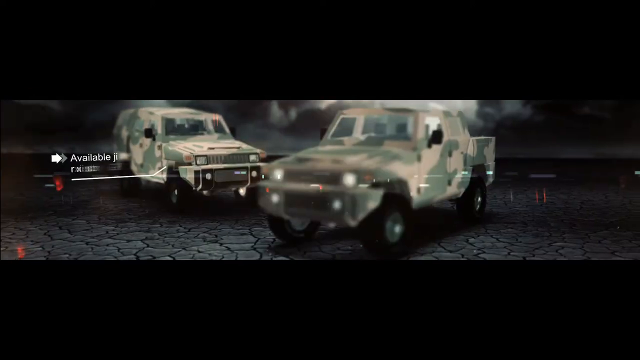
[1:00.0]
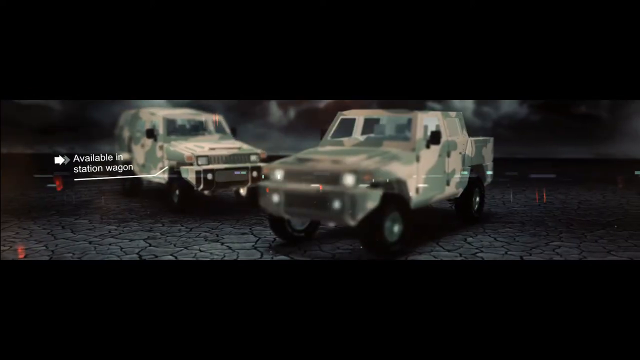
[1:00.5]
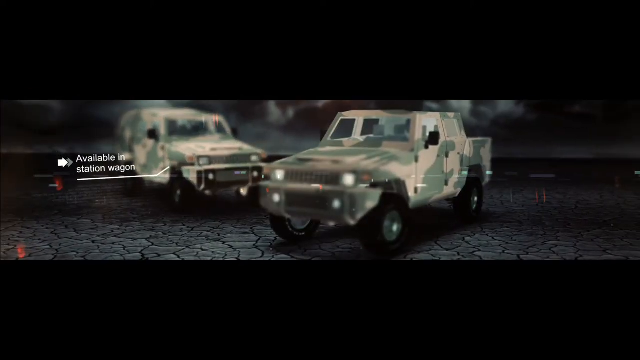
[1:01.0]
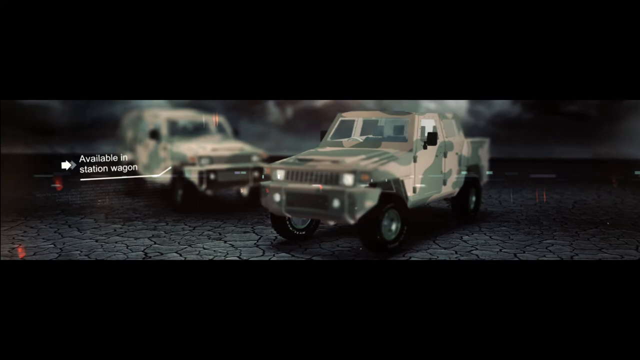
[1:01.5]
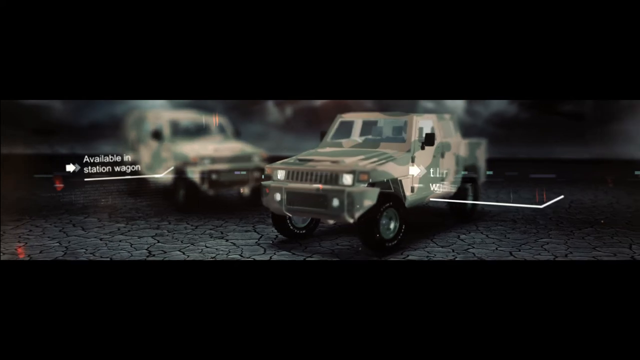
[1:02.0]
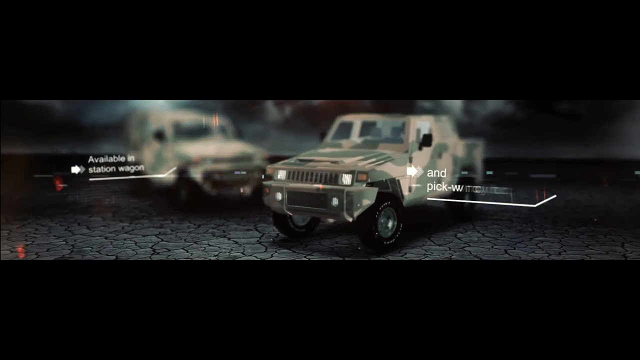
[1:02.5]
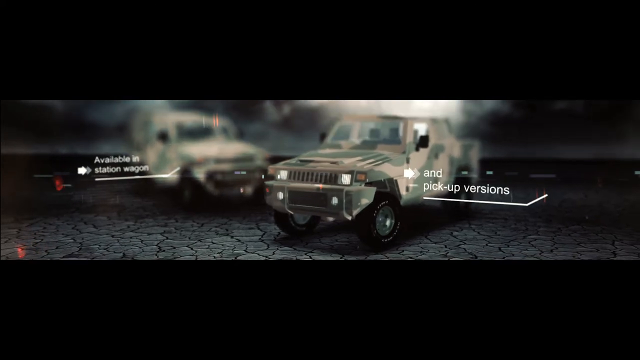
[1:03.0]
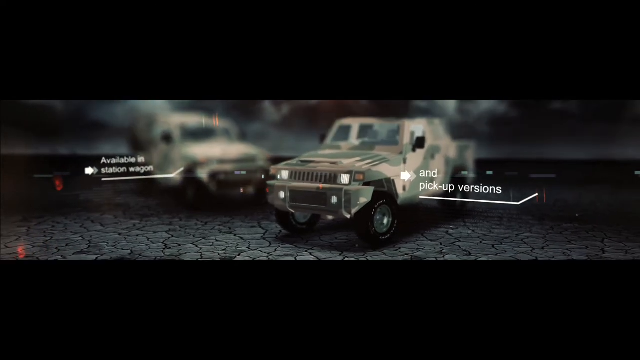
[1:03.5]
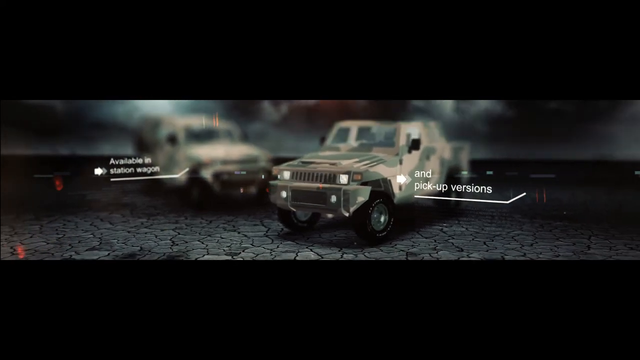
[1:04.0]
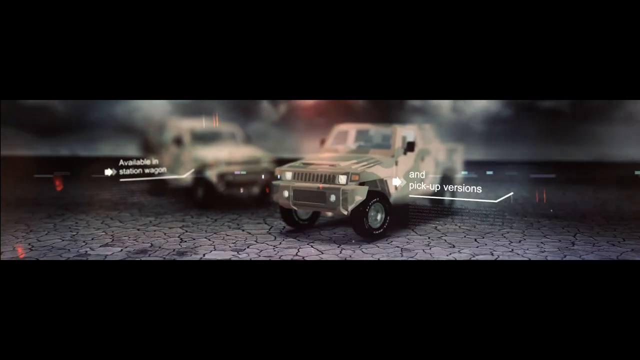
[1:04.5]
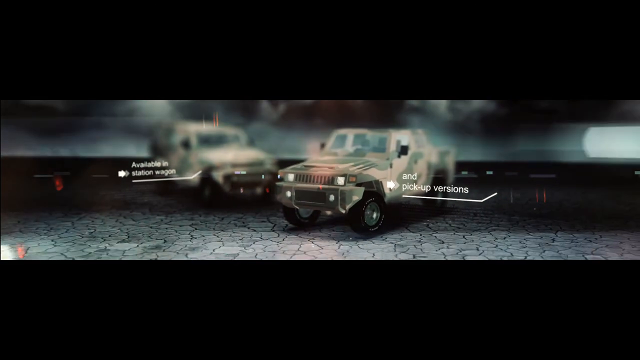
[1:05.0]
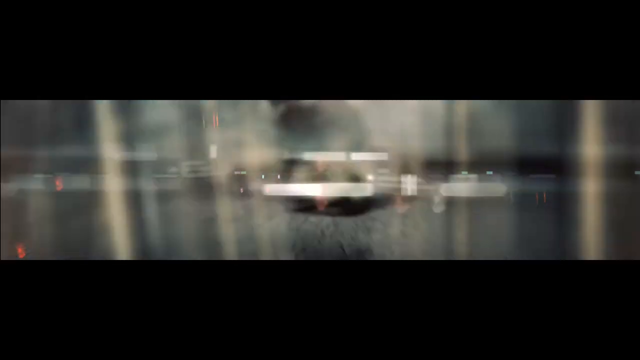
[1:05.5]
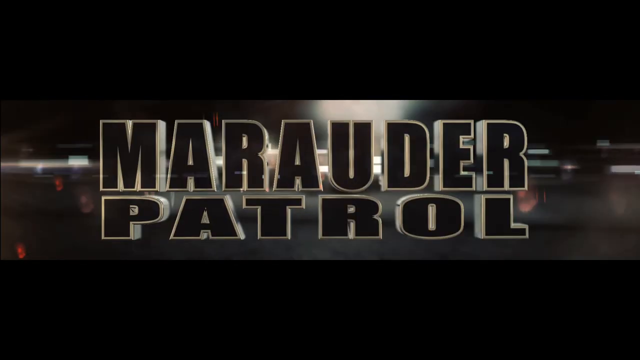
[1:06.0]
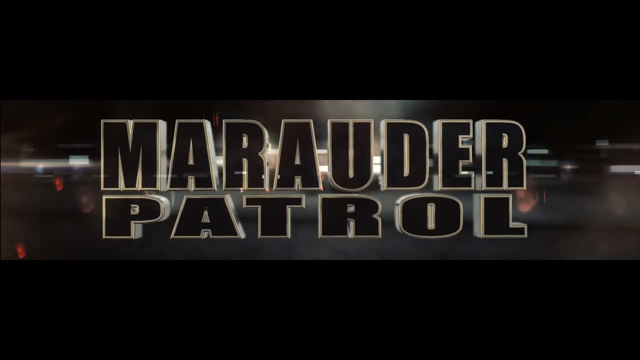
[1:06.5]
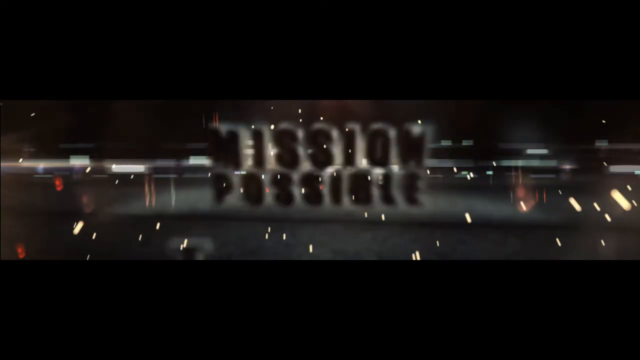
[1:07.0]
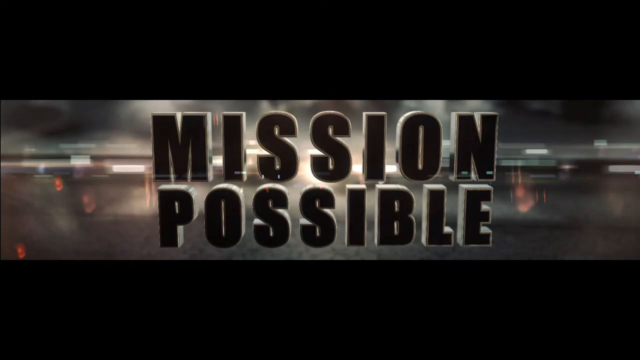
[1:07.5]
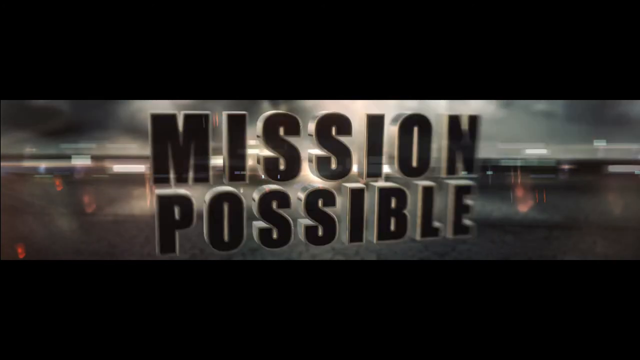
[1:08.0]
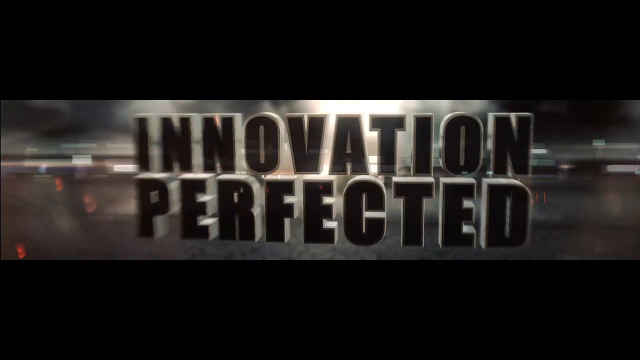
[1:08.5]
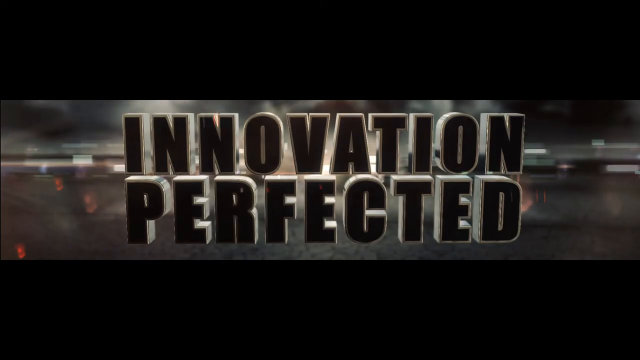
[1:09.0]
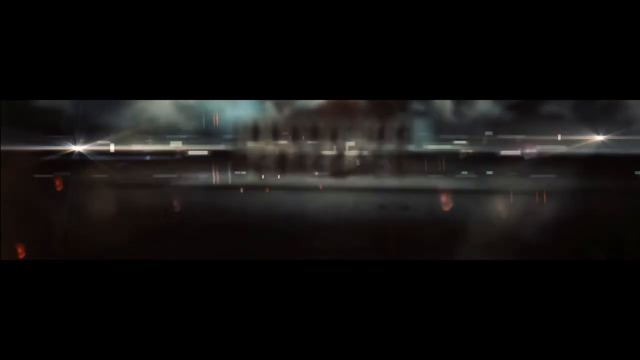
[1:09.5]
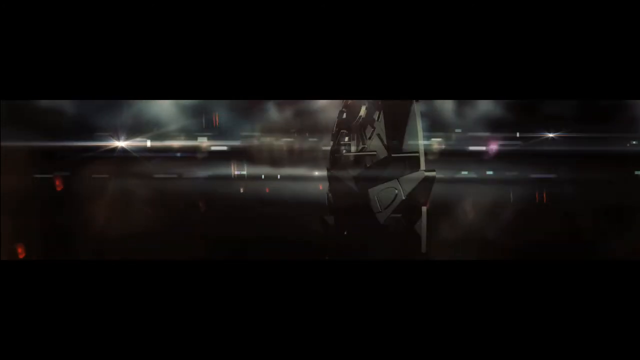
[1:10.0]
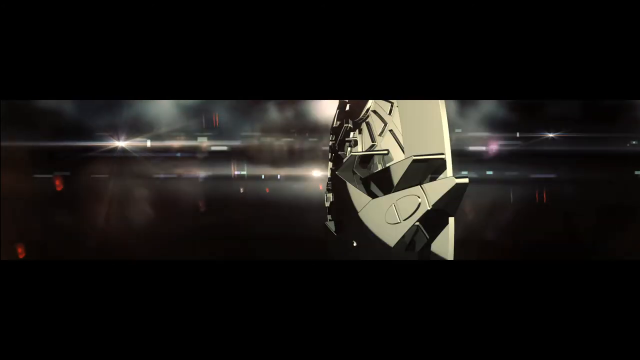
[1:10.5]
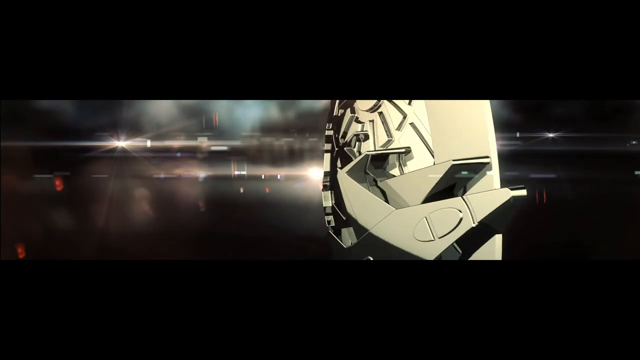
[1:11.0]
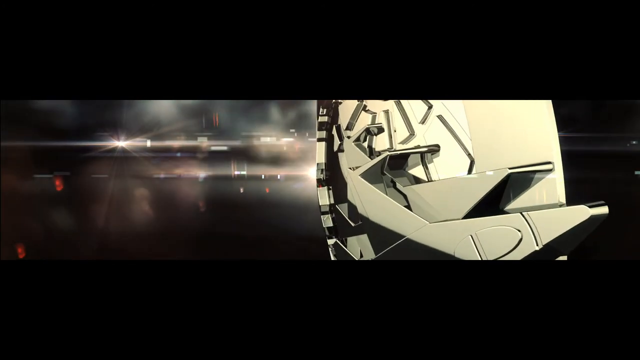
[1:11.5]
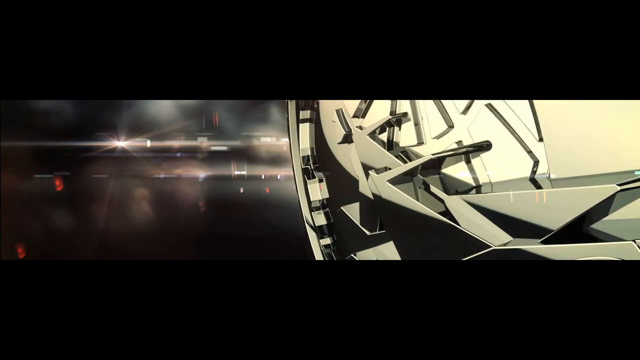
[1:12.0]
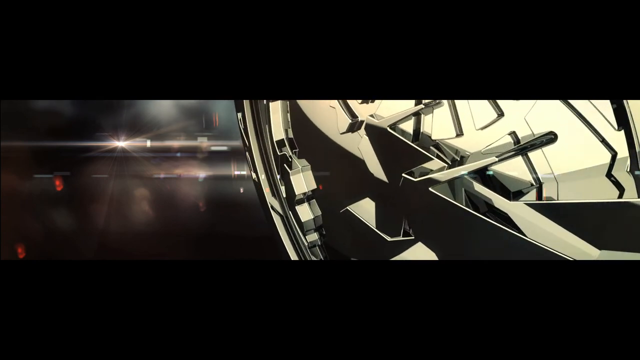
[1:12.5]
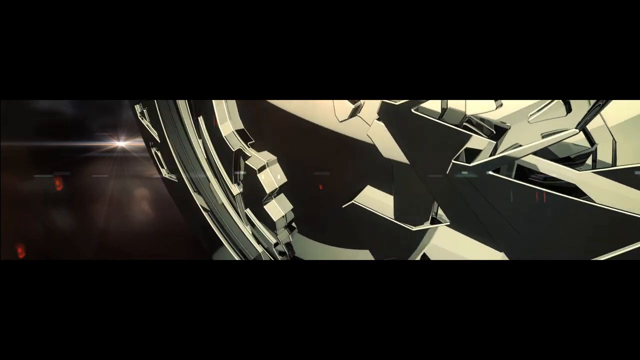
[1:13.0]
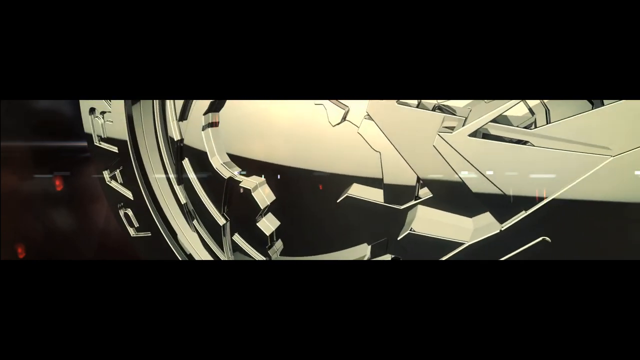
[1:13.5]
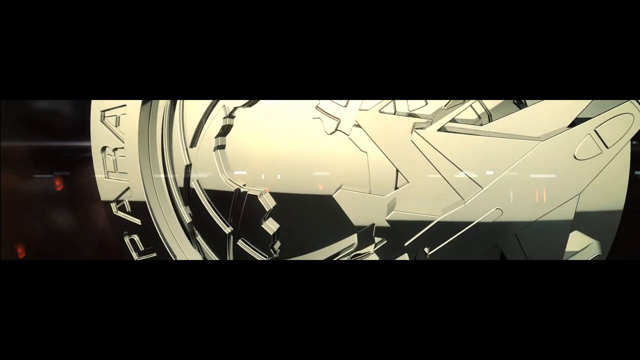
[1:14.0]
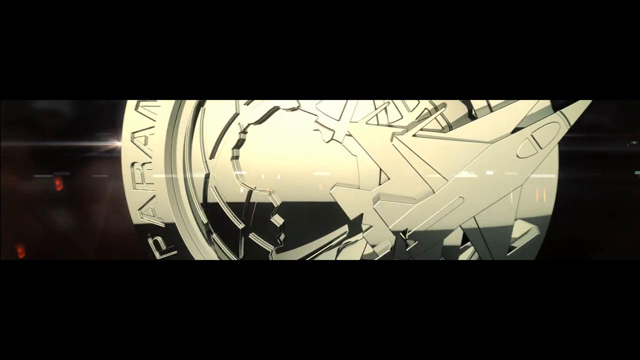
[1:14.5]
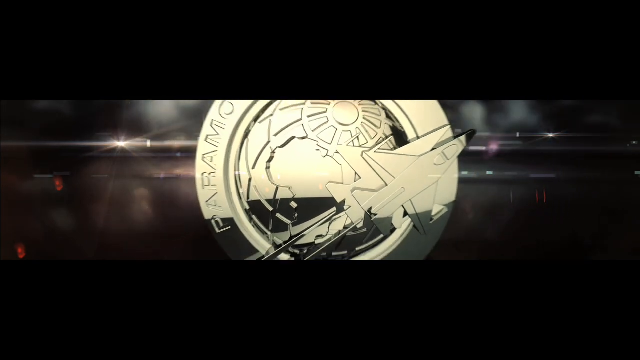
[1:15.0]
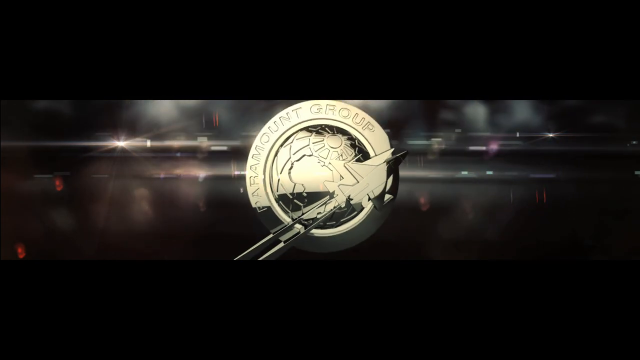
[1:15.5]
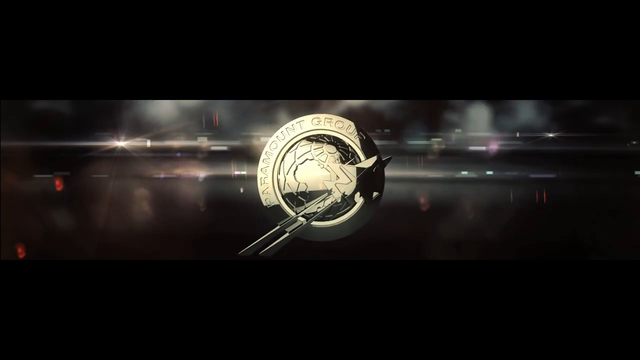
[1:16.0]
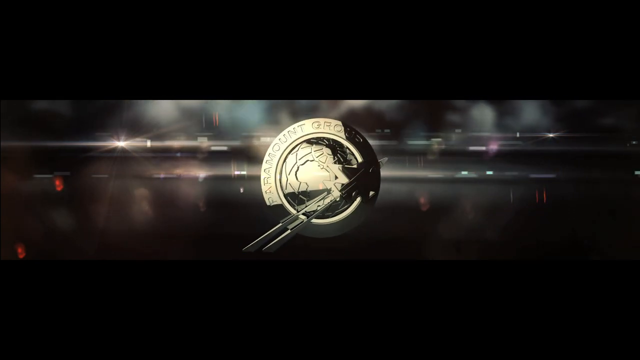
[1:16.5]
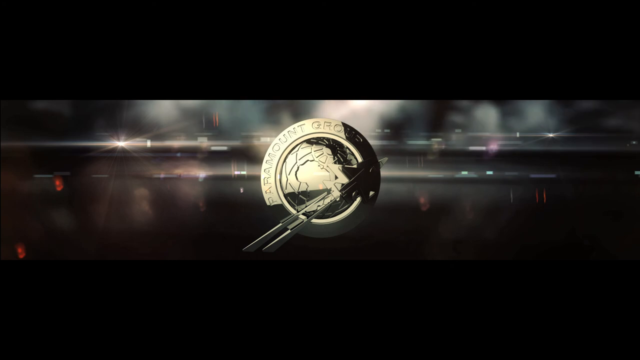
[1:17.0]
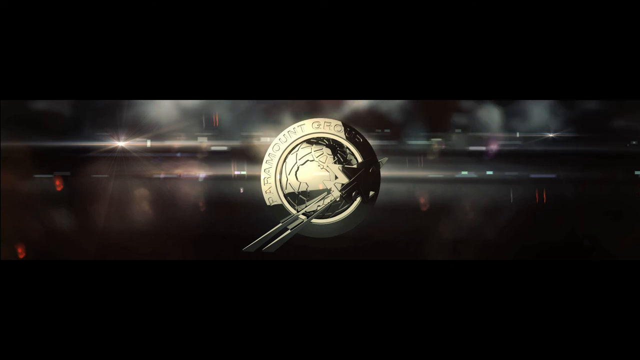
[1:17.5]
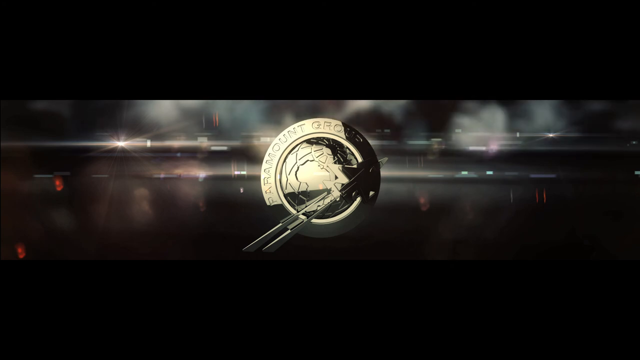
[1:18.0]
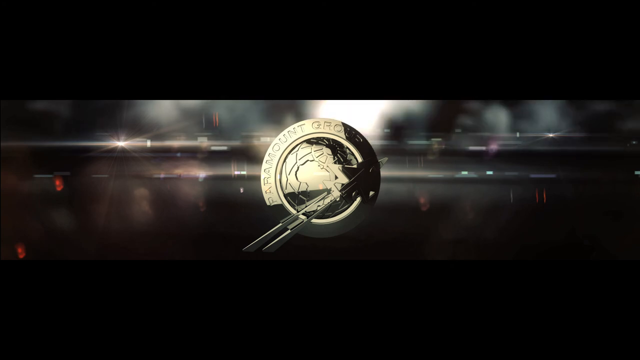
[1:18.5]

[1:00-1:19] Text reads "available in station wagon and pickup versions," referring to a station wagon version and a pickup truck version of the car. Then the text "Marauder Patrol, Mission Possible, Innovation Perfected" appears. The view zooms into a logo that reads "Paramount Group," with a globe engraved in the metal, apparently focusing on the continent of South America. The fronts of the cars look fairly similar, each with two lights and two smaller lights below them, and the tires look fairly large.